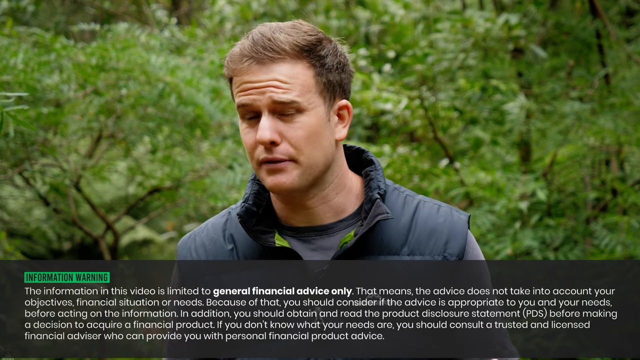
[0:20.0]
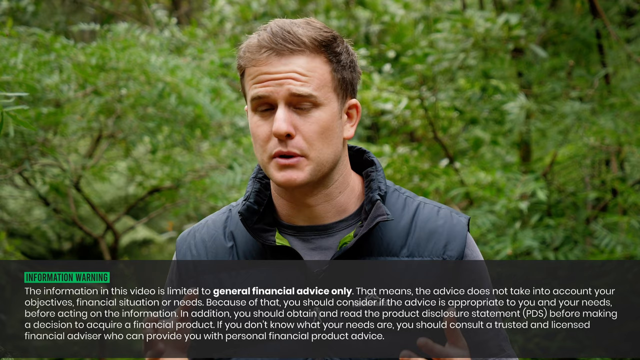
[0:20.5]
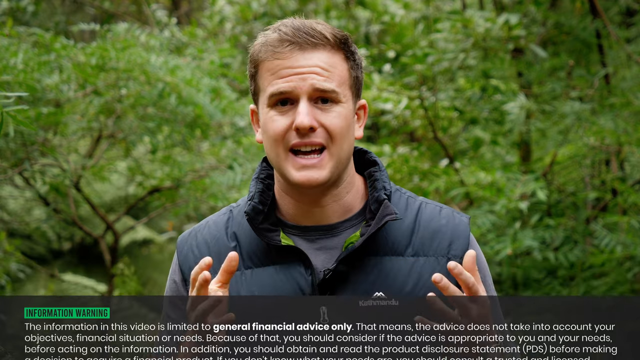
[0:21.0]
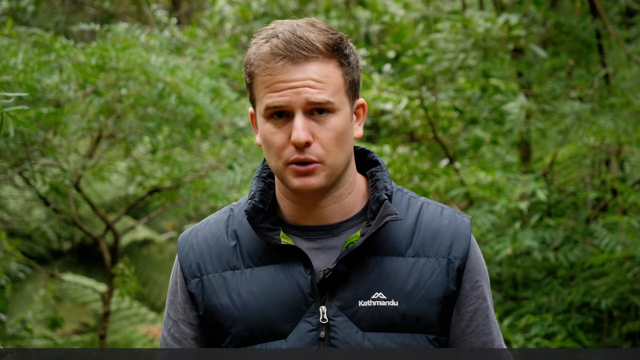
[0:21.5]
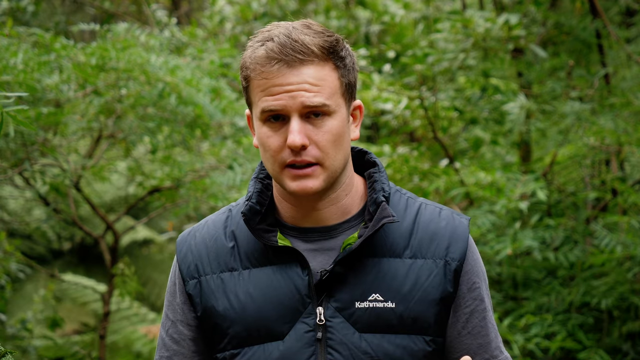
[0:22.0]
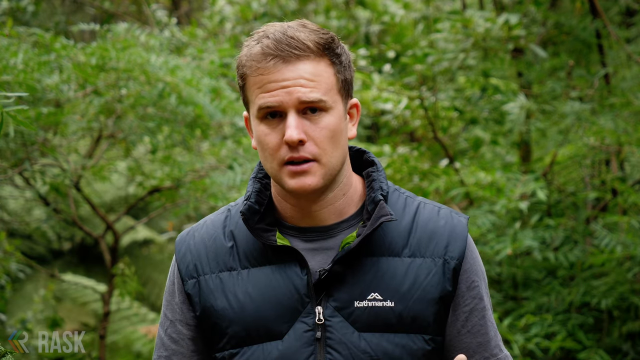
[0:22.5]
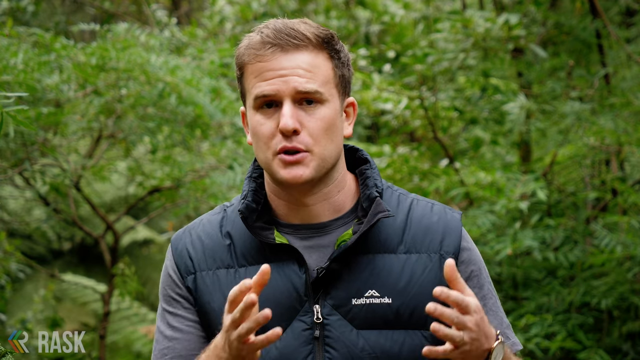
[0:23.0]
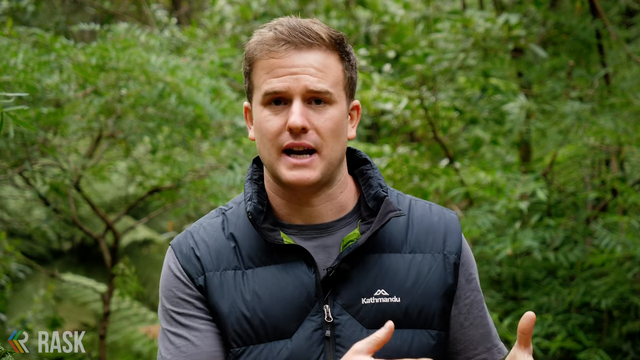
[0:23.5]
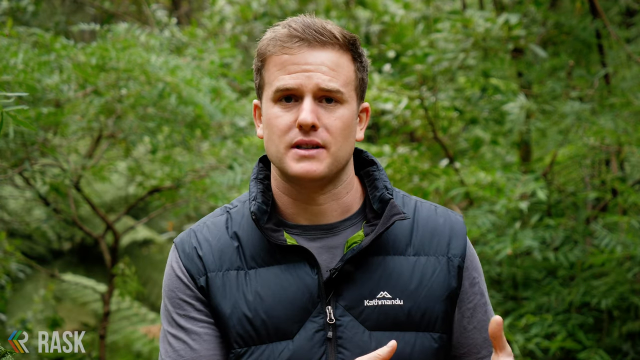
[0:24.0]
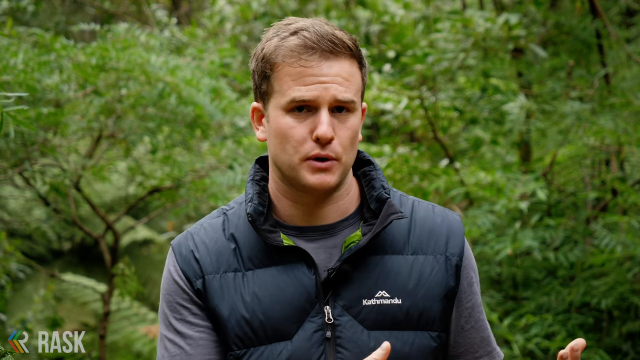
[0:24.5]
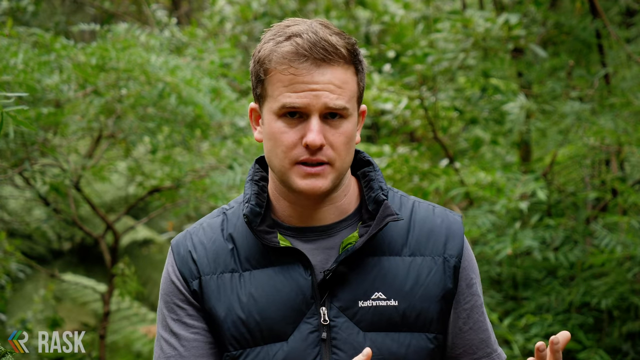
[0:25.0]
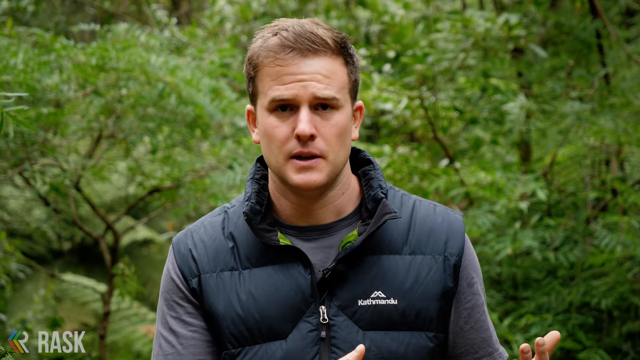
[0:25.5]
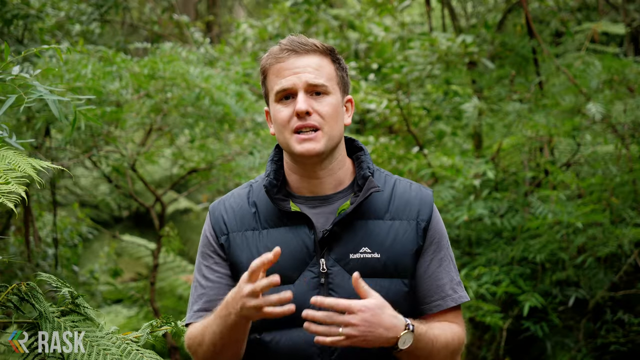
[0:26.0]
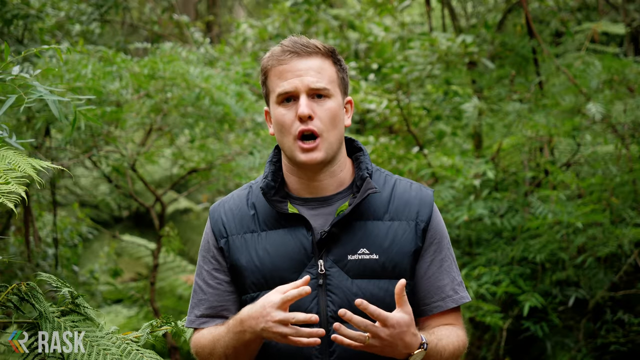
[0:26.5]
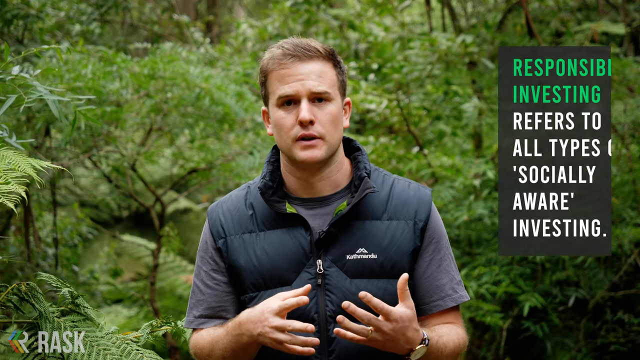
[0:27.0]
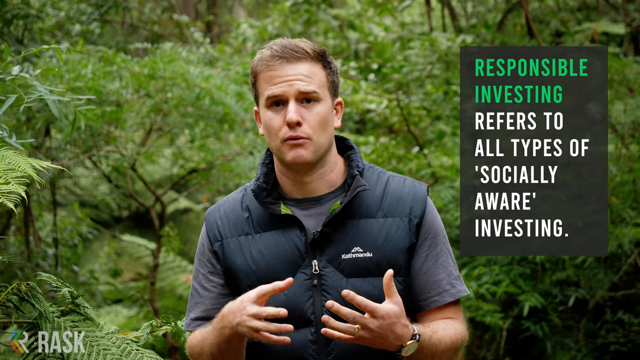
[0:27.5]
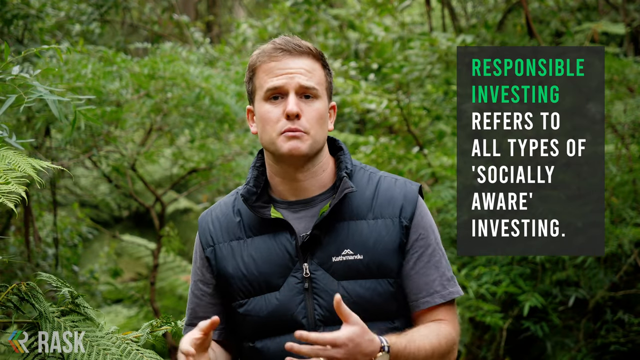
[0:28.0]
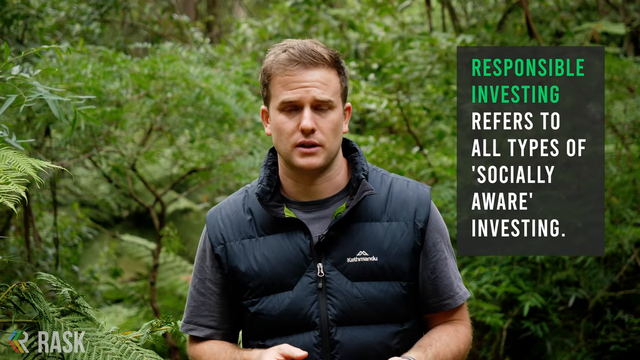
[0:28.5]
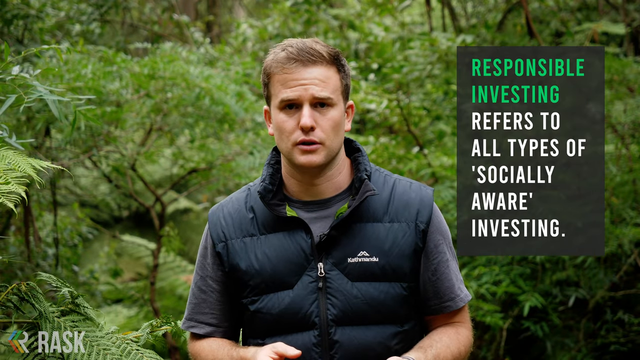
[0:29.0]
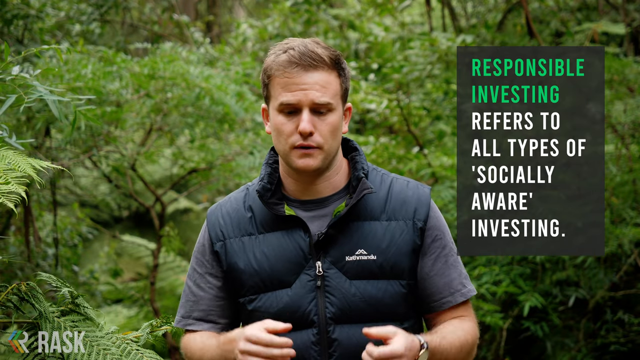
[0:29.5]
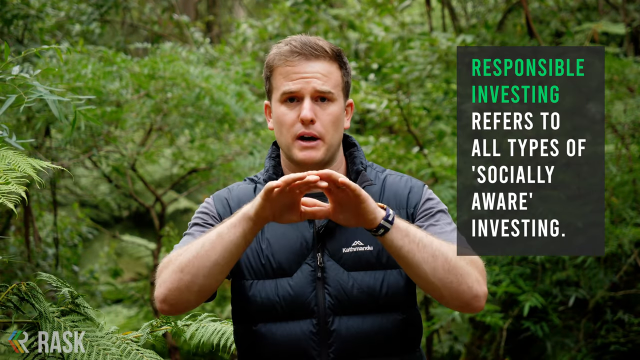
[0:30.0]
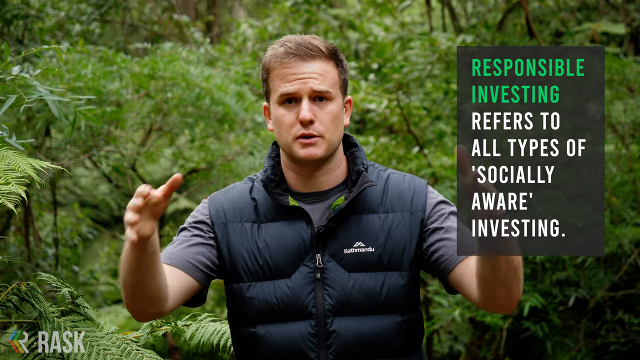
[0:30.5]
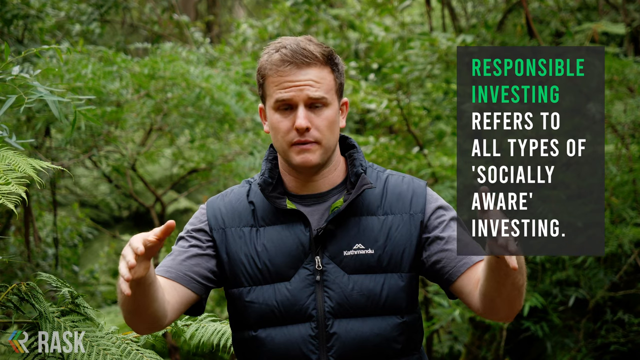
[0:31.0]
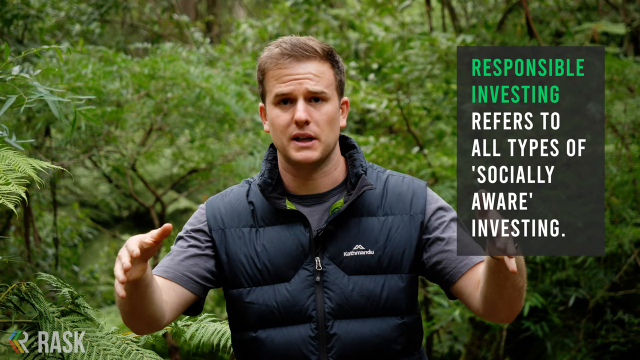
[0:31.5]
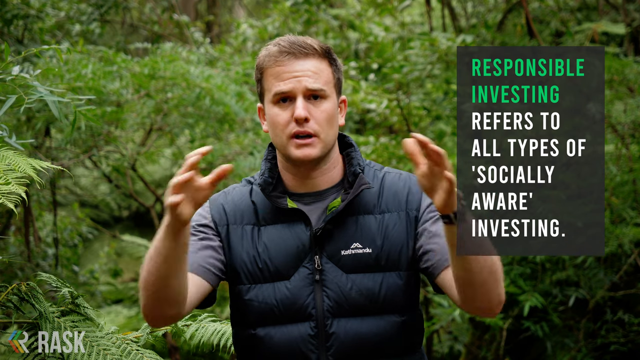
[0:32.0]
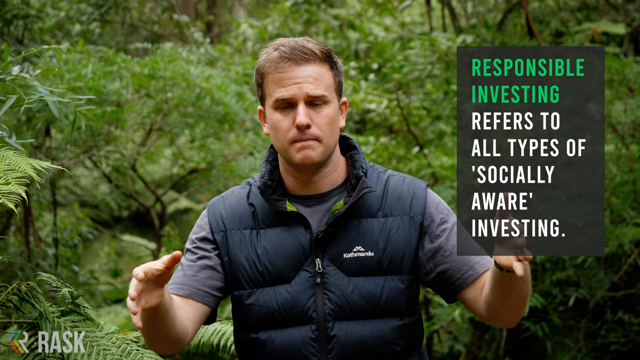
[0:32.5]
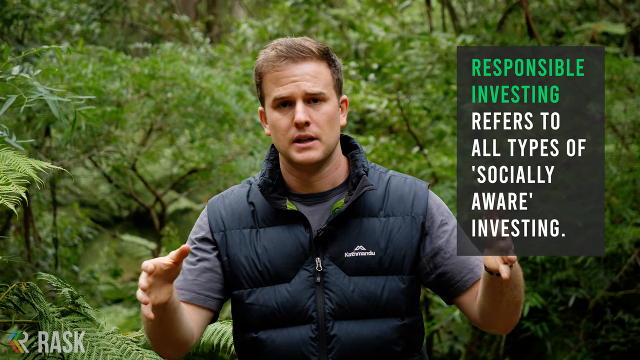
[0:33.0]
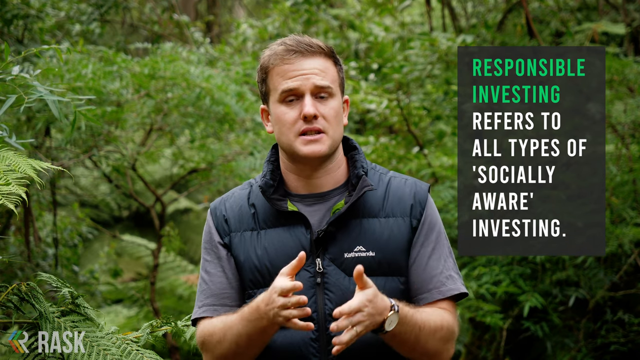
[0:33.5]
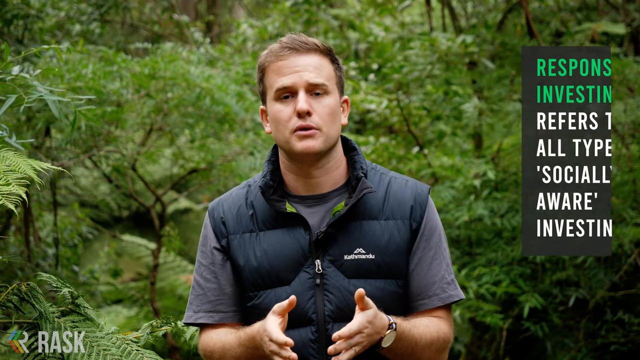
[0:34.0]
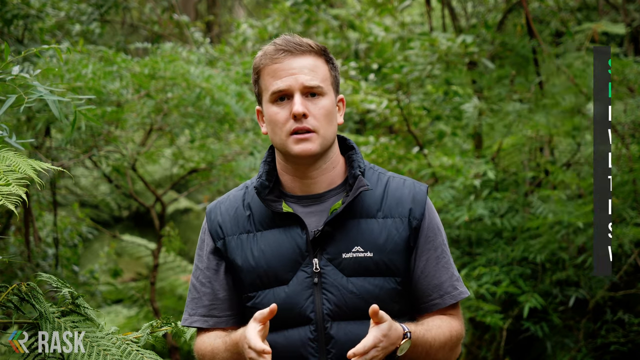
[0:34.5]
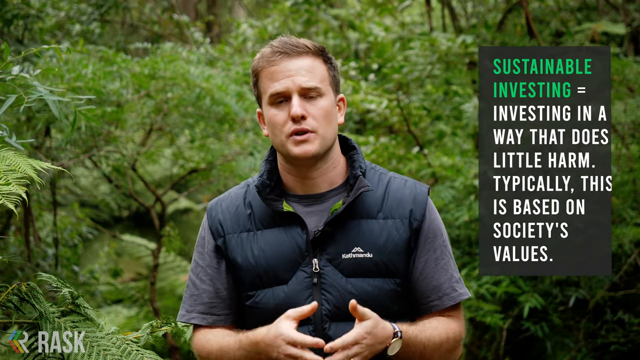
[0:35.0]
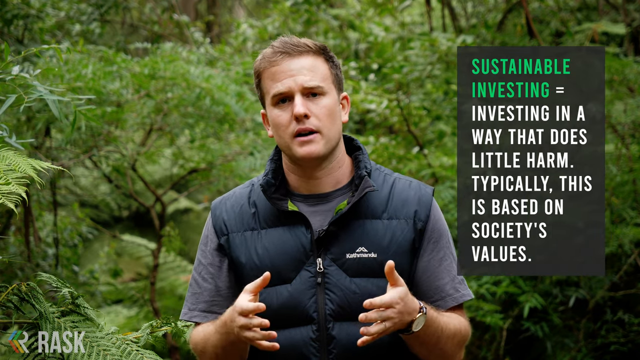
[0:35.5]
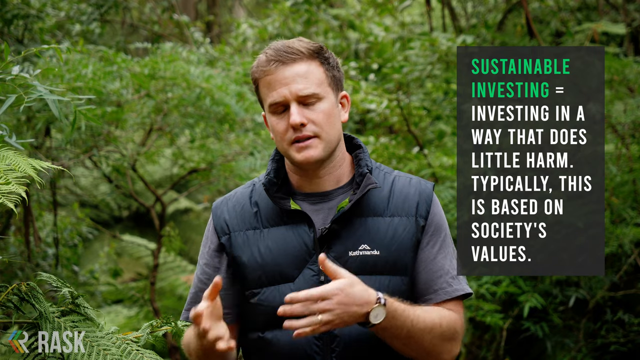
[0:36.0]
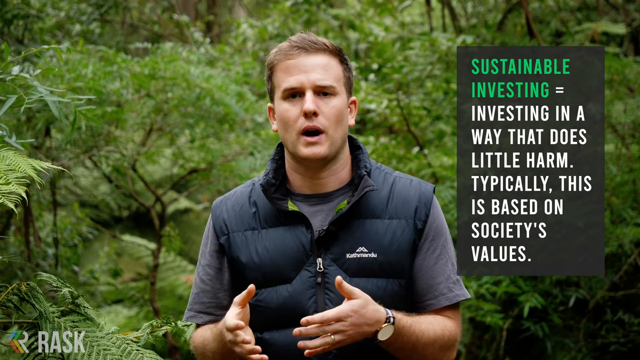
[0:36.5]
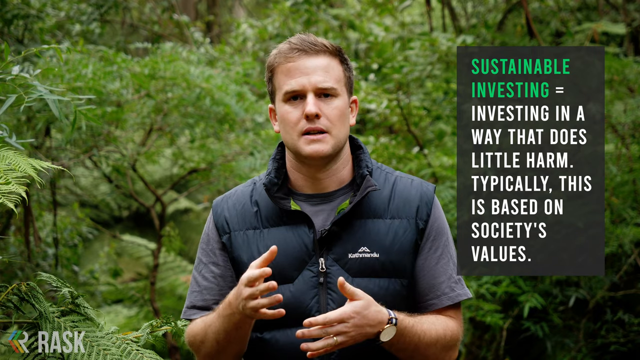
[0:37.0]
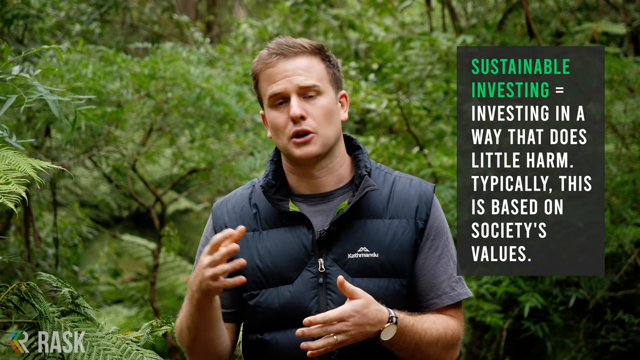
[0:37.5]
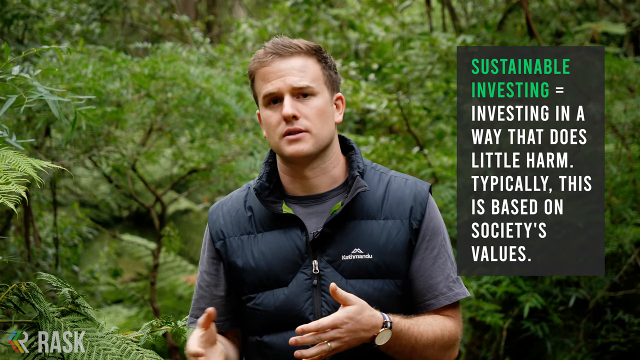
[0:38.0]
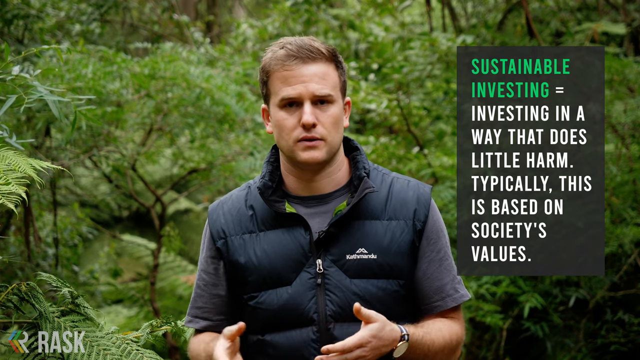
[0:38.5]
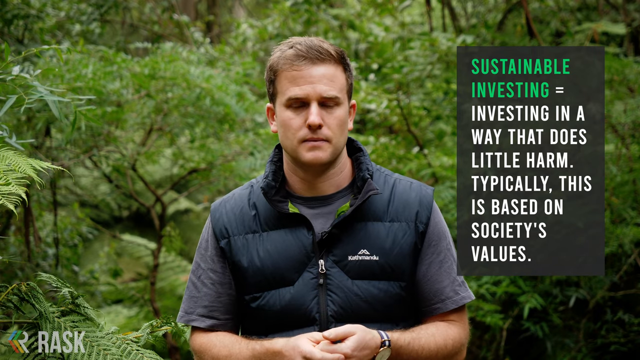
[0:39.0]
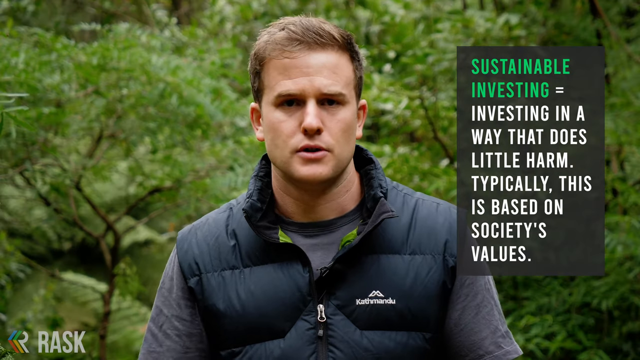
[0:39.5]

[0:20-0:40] The man gestures with his hand as he talks. On-screen text states that responsible investing refers to all types of socially aware investing. An icon pops up on the right-hand side of the man, giving a general warning. He is sitting down in the bush, using his hands to demonstrate, and wears a wristwatch. The screen also shows text about sustainable investing, describing it as investing in a way that does little harm, based on society values.